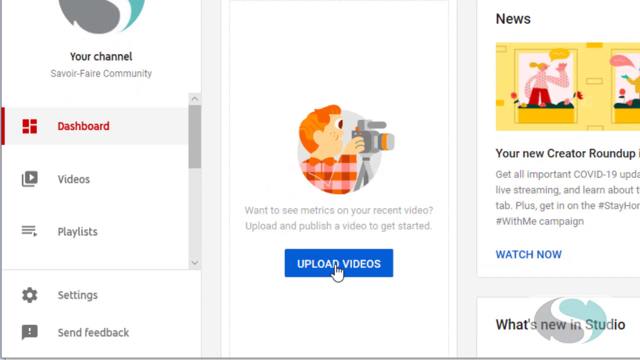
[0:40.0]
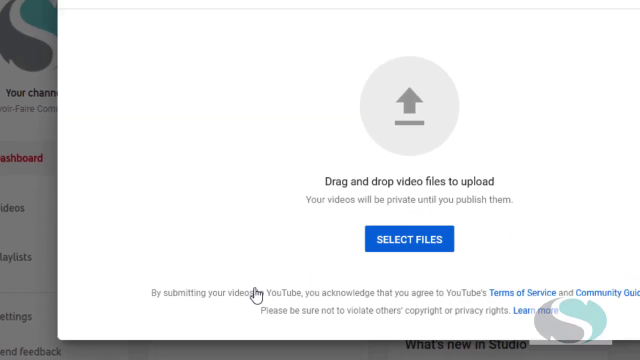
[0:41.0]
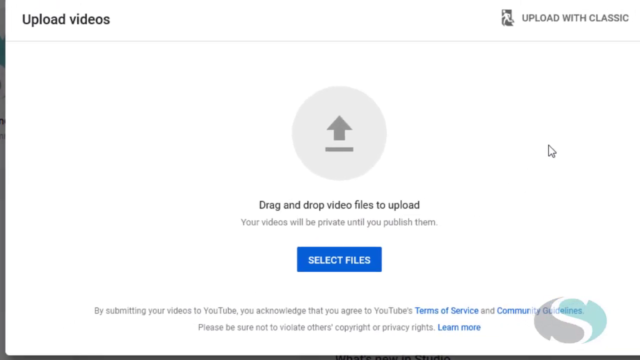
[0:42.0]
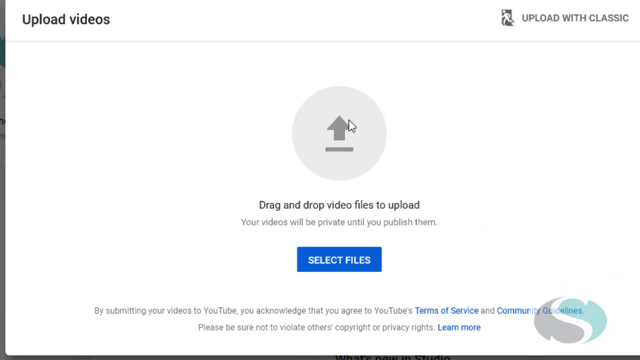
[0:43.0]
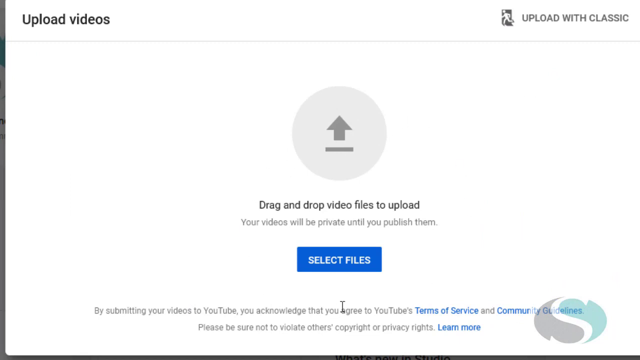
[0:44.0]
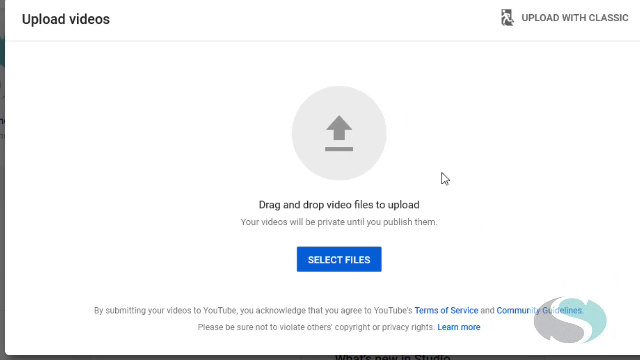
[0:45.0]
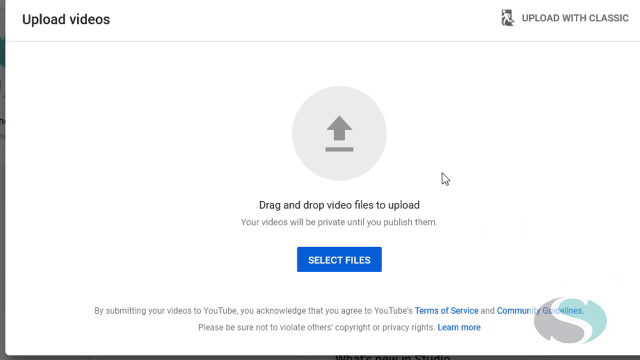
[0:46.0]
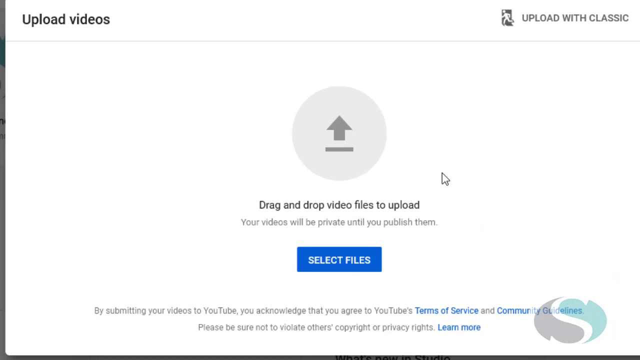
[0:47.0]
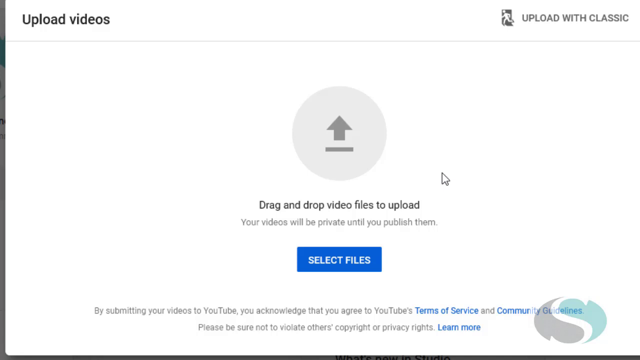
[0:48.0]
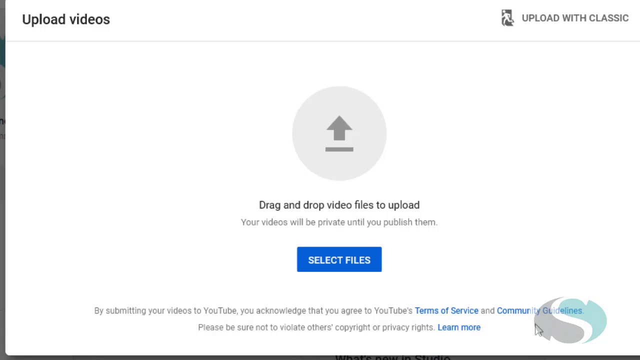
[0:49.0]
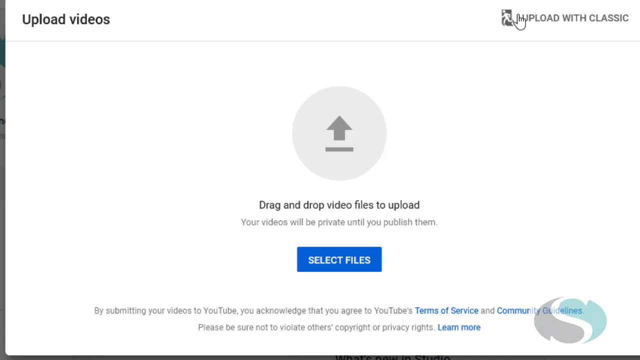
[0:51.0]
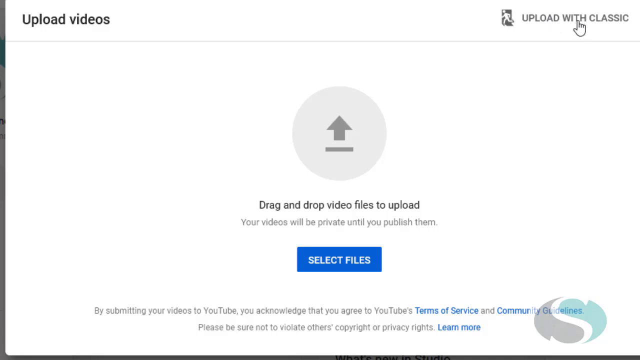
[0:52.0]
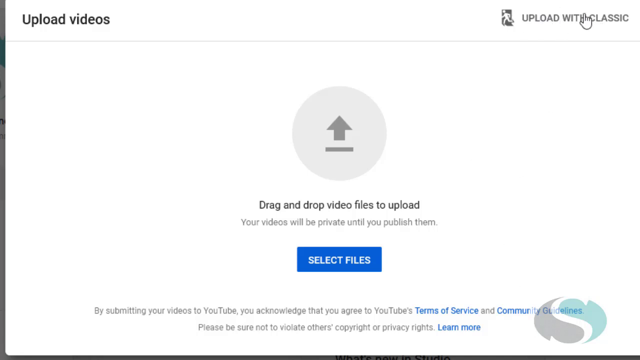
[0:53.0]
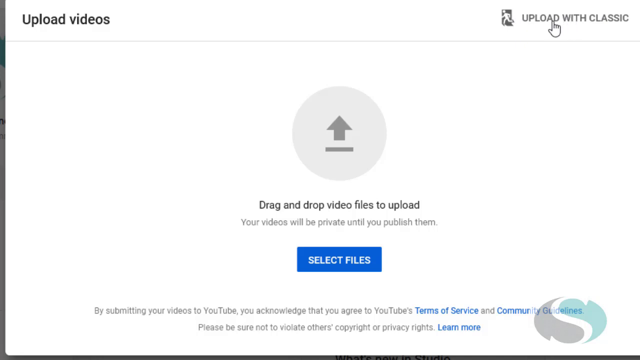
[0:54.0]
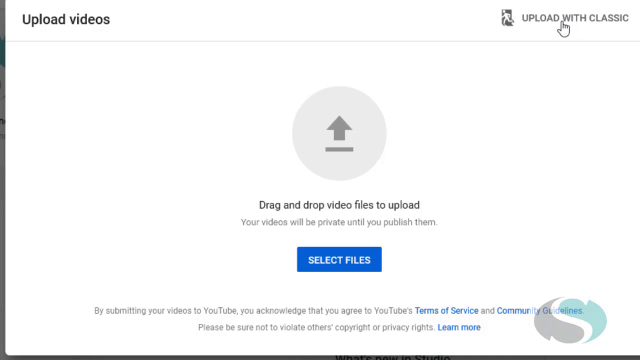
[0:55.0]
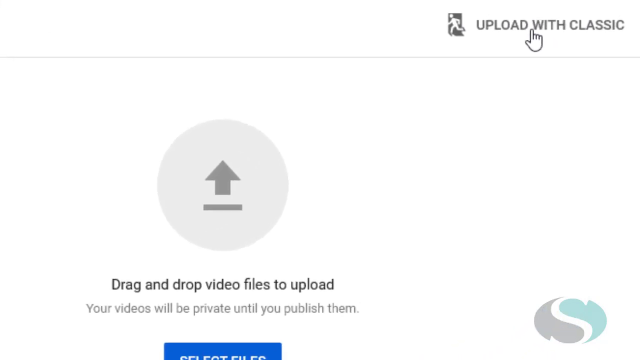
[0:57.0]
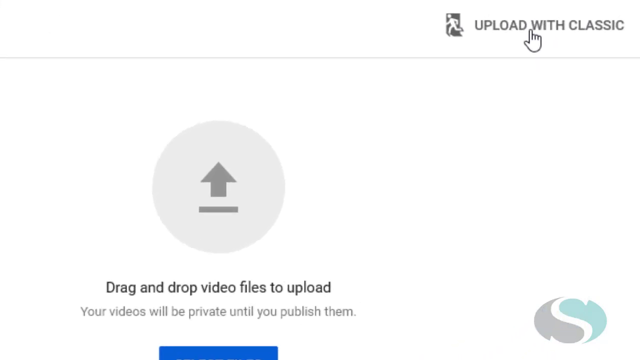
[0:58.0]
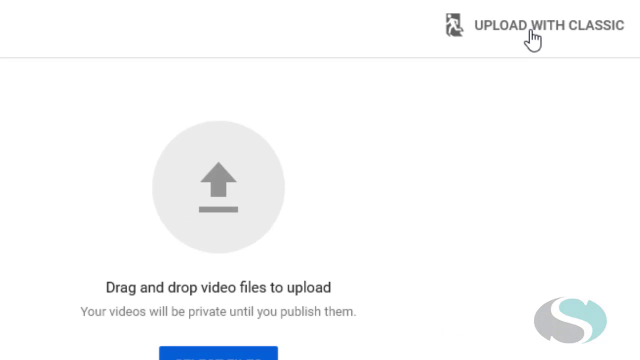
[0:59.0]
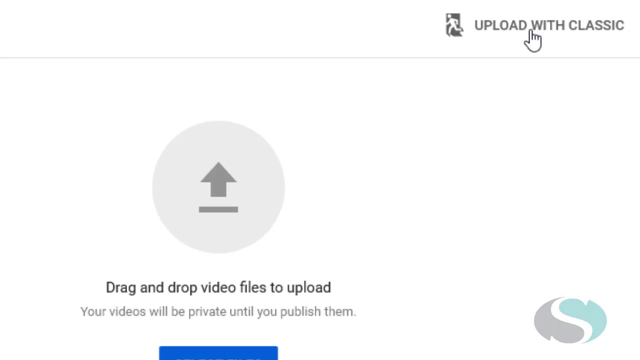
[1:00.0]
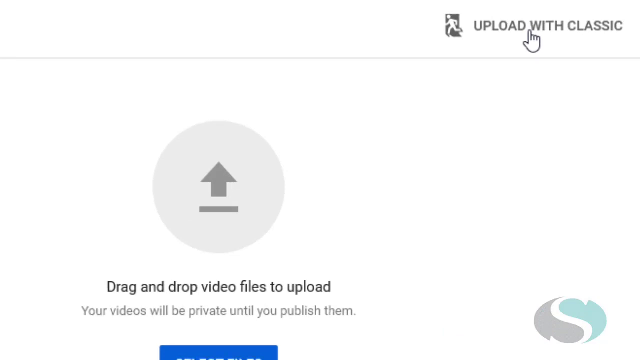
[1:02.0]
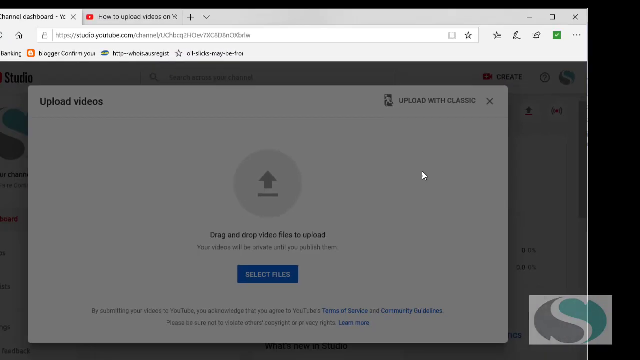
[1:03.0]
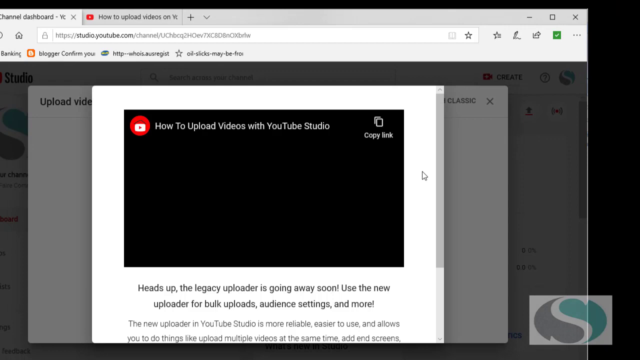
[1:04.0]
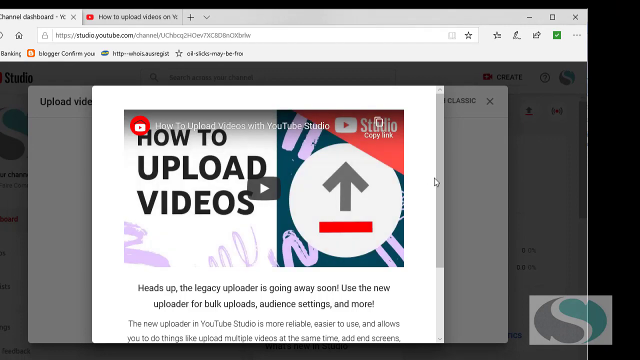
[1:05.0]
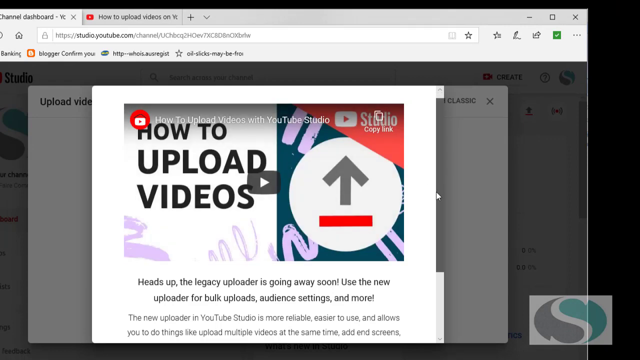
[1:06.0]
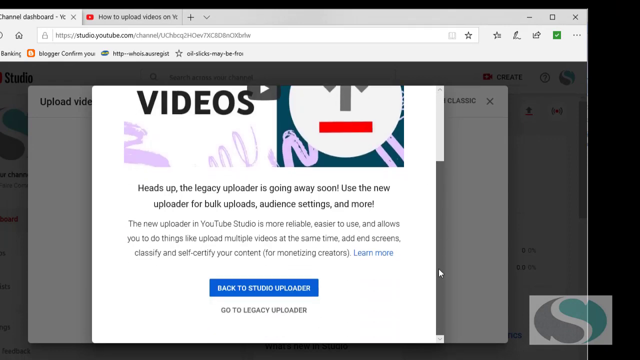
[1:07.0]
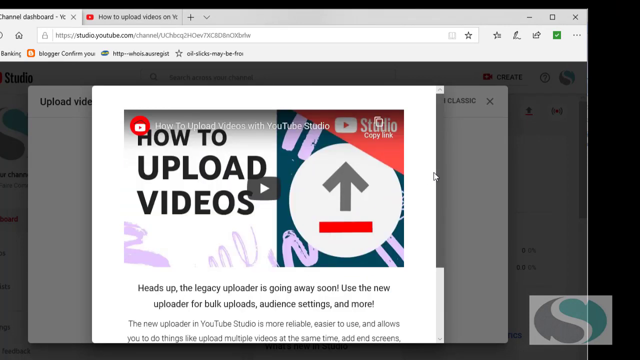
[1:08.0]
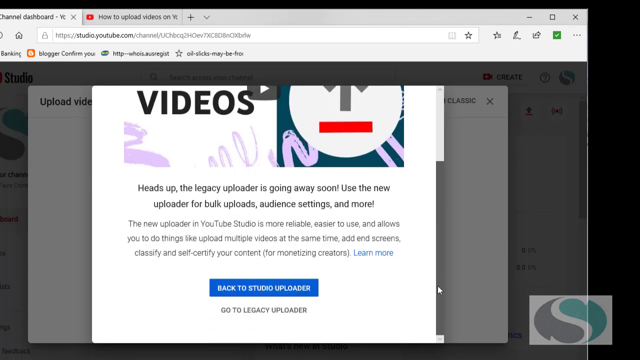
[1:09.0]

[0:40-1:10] Inside the YouTube dashboard, the user hovers over the upload videos button. Right above it the text reads "I want to see metrics on your recent video. Upload and publish a video to get started." An area titled "upload videos" then appears. On its right side is "upload with classic" with a small clip art of a person. In the middle of the screen is a circle with an arrow in it and a small underline beneath, followed by the text "drag and drop video files to upload" and, below that, "your videos will be private until you publish them." The user circles the whole area with the mouse arrow, as if interested in dragging and dropping or adding a file, then moves up to "upload with classic," apparently wanting to use the classic feature instead of the current one. A video window pops up titled "How to upload videos with classic," showing how to upload videos to YouTube Studio.